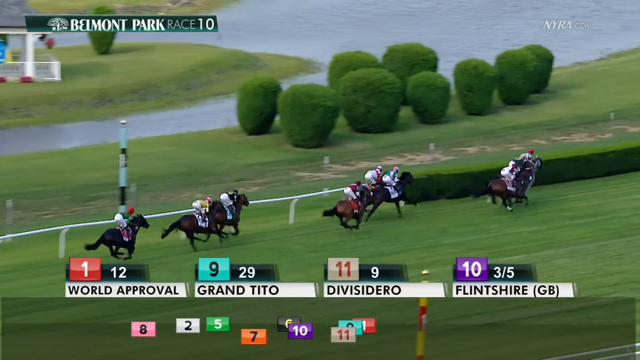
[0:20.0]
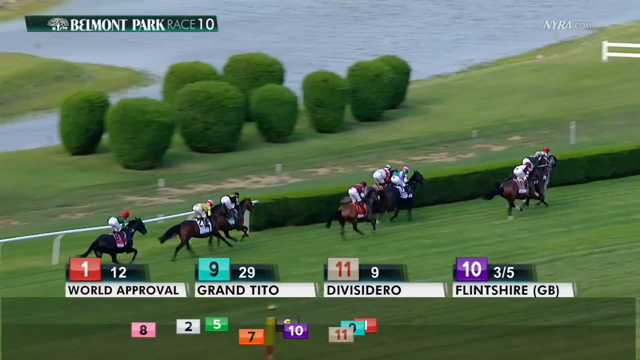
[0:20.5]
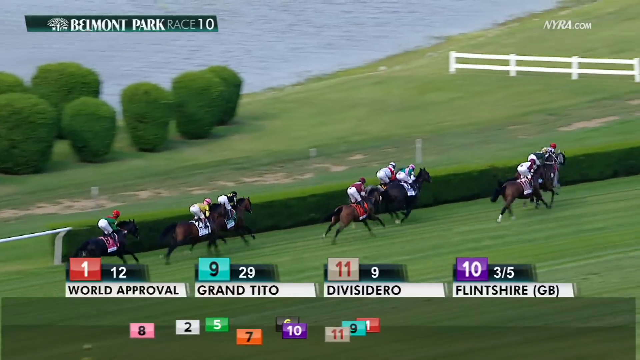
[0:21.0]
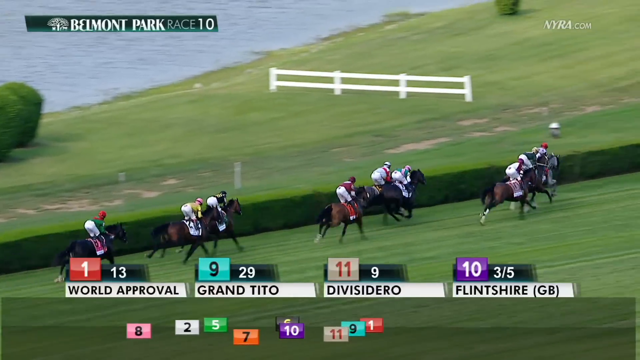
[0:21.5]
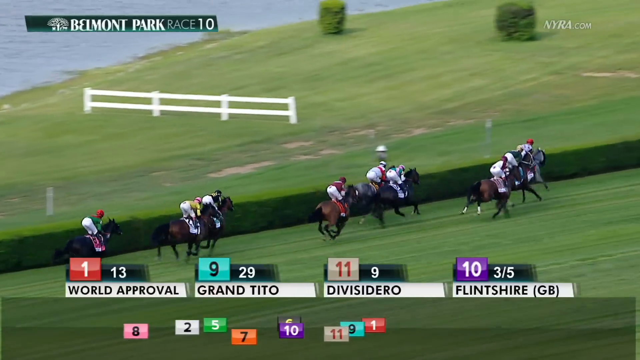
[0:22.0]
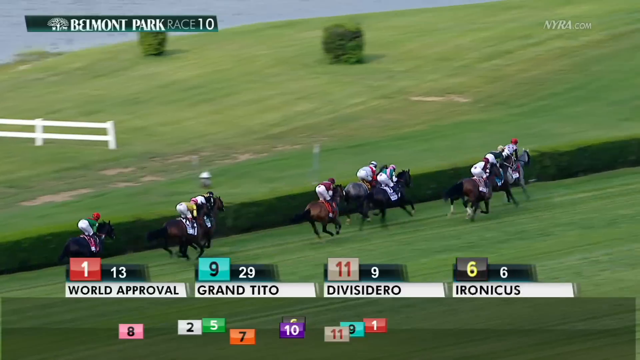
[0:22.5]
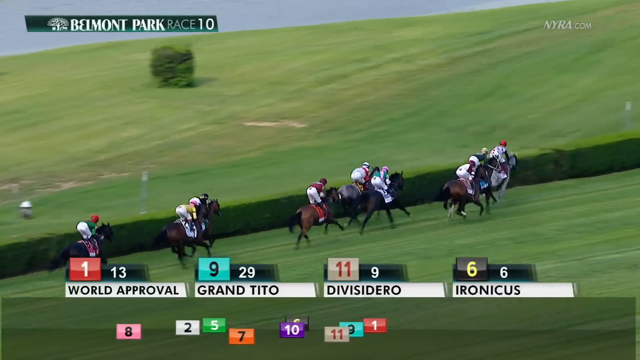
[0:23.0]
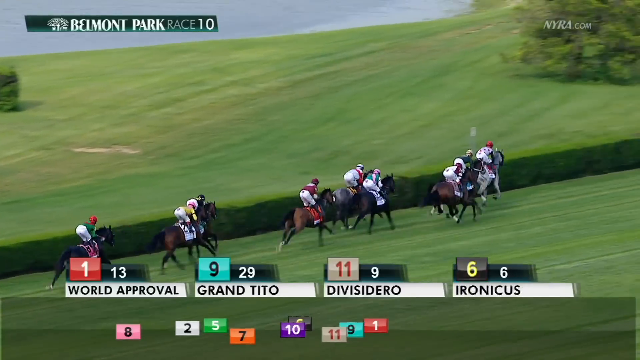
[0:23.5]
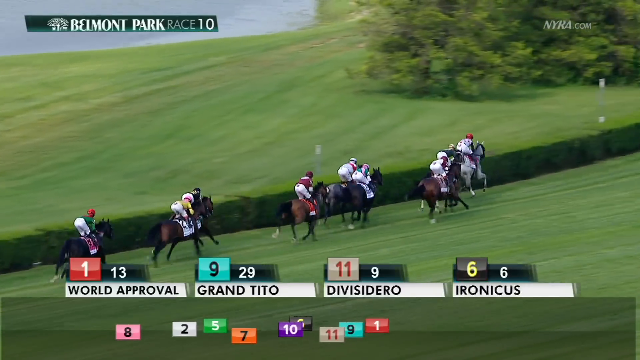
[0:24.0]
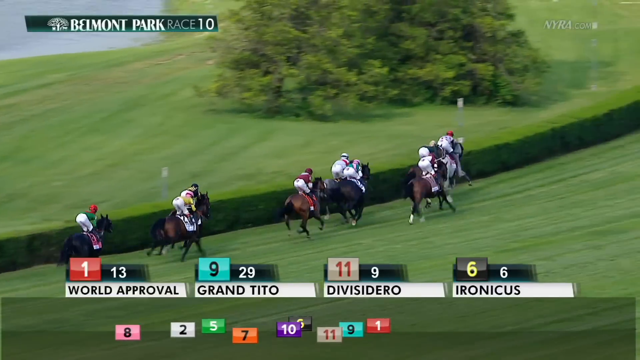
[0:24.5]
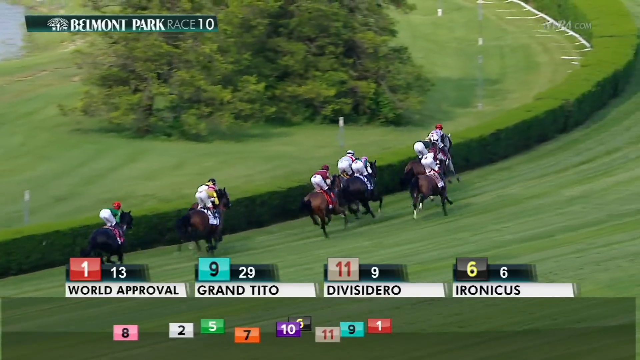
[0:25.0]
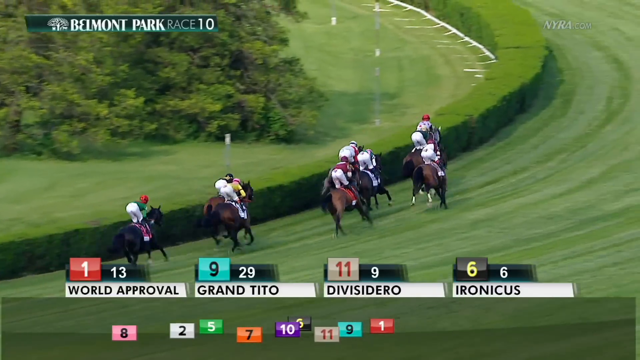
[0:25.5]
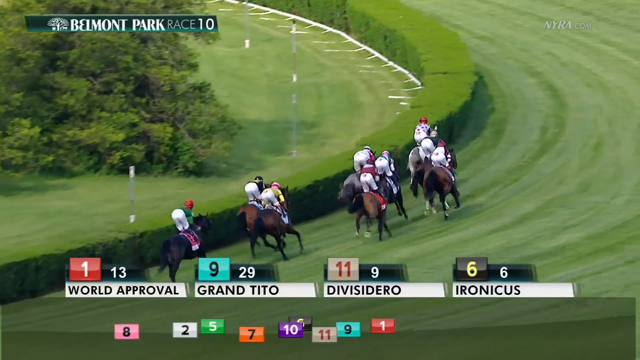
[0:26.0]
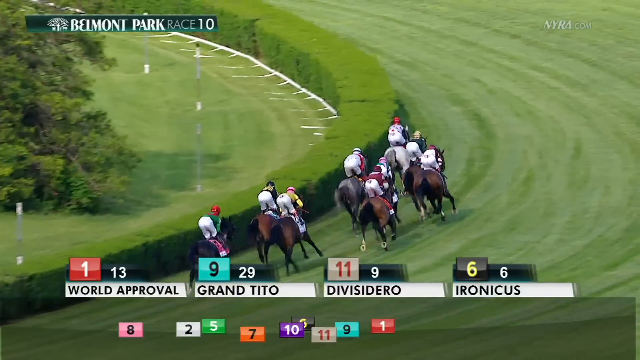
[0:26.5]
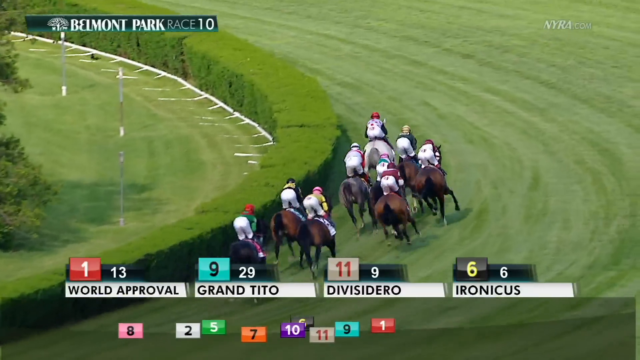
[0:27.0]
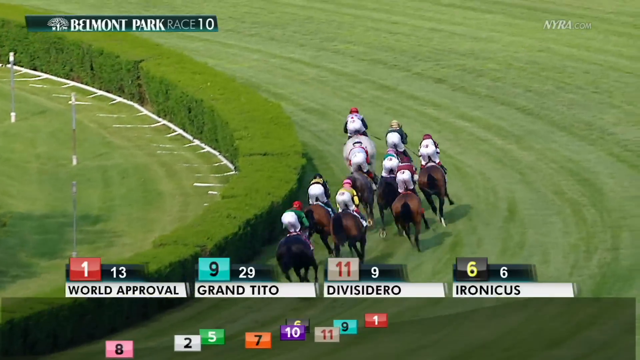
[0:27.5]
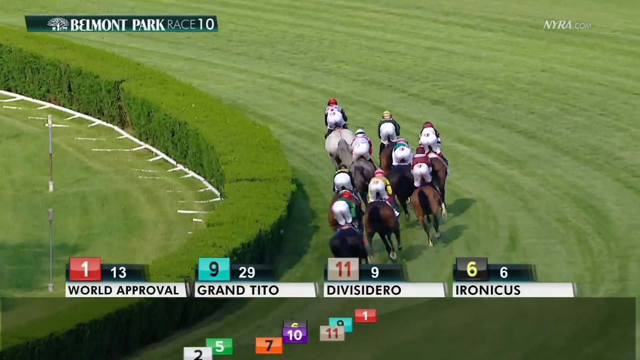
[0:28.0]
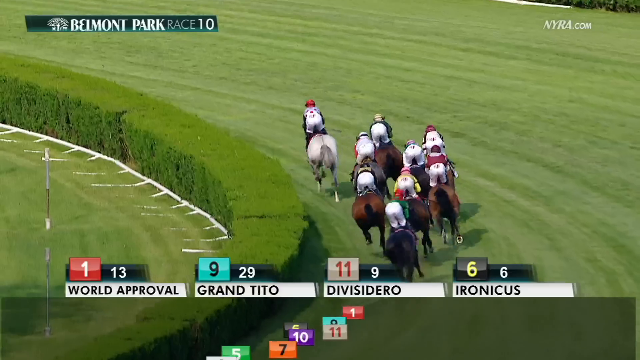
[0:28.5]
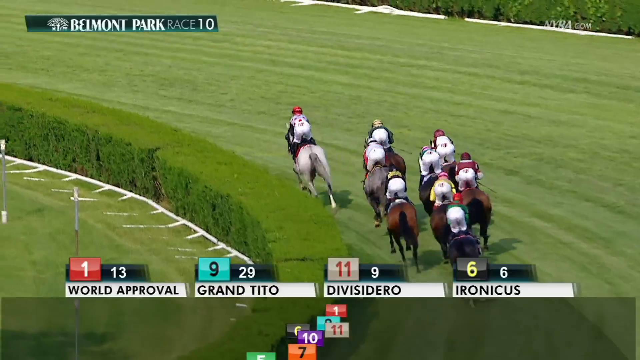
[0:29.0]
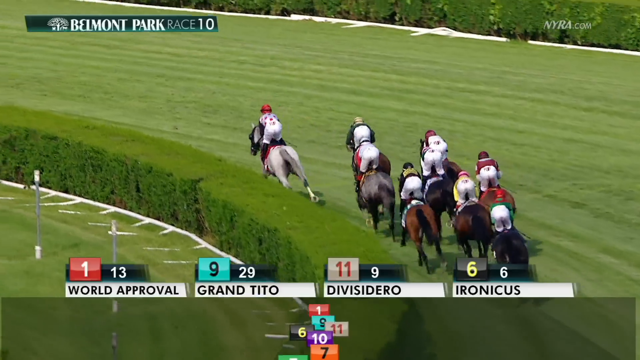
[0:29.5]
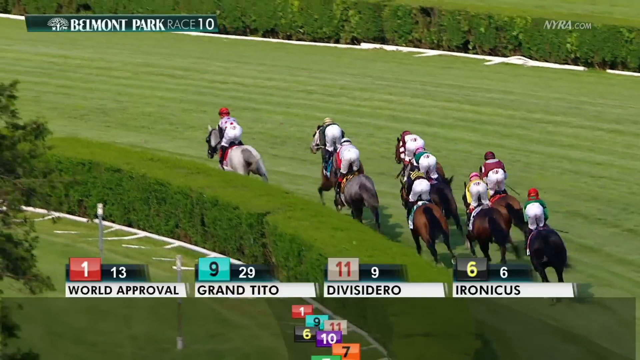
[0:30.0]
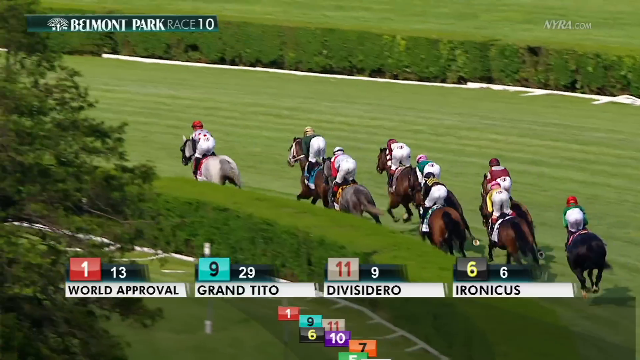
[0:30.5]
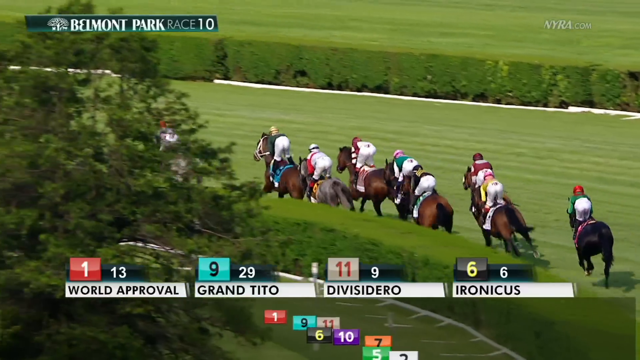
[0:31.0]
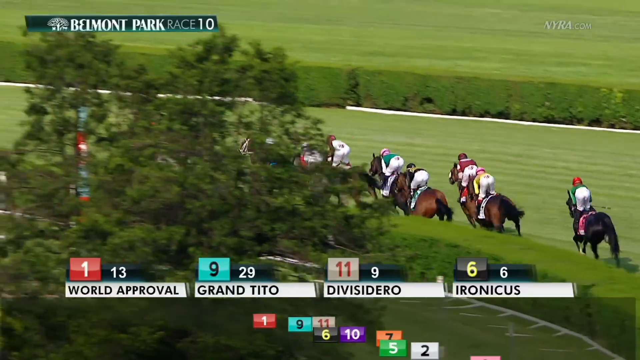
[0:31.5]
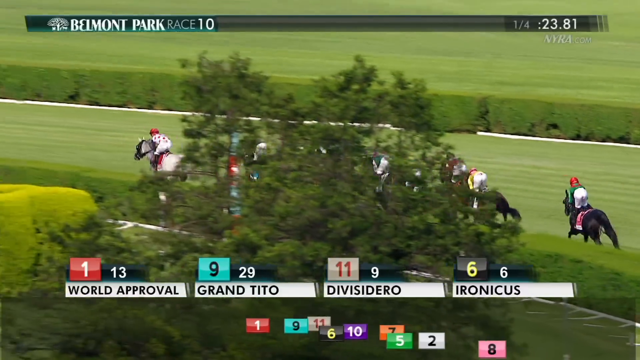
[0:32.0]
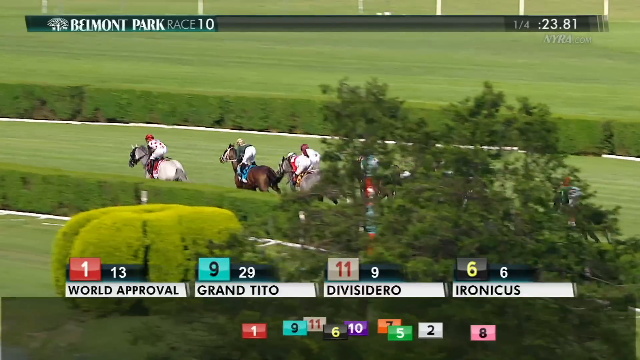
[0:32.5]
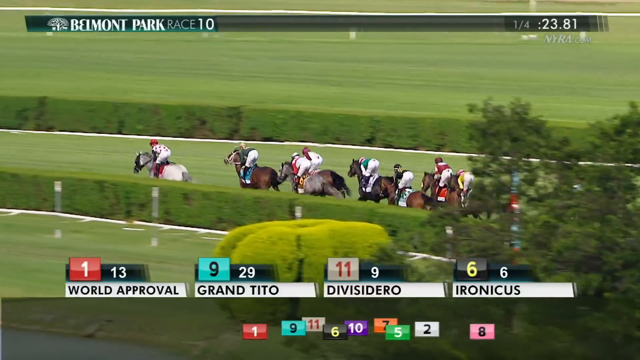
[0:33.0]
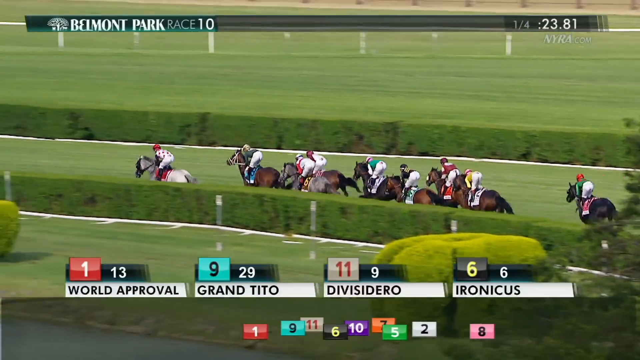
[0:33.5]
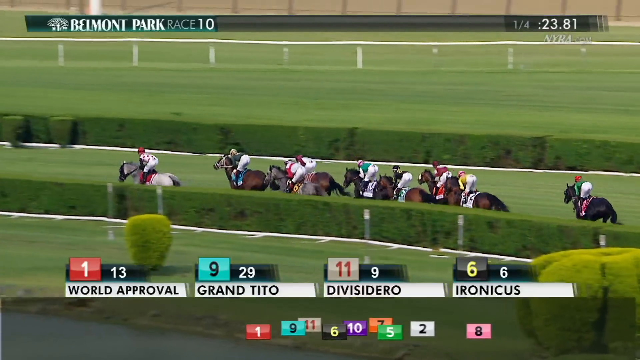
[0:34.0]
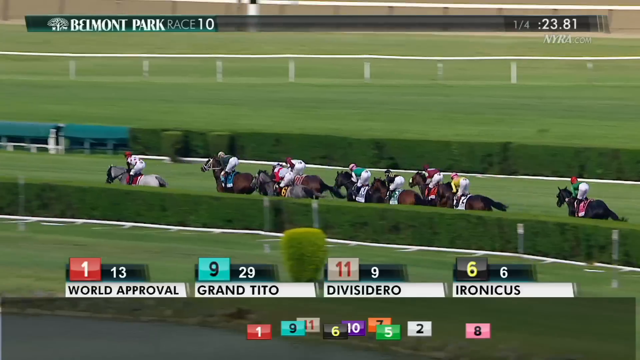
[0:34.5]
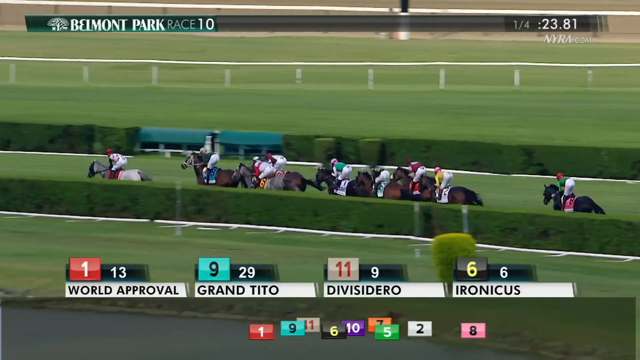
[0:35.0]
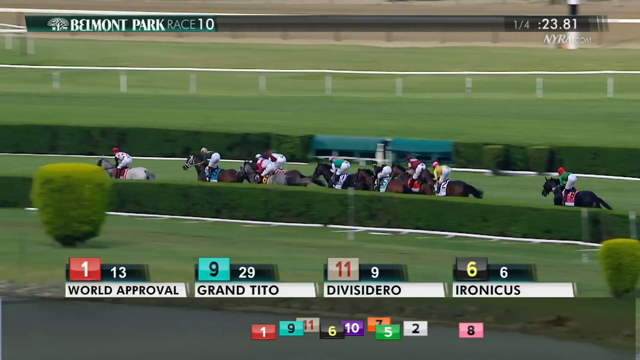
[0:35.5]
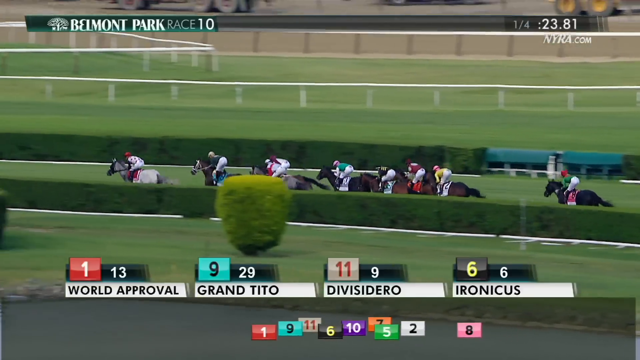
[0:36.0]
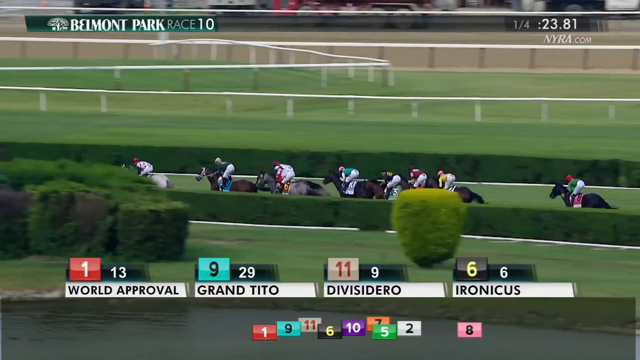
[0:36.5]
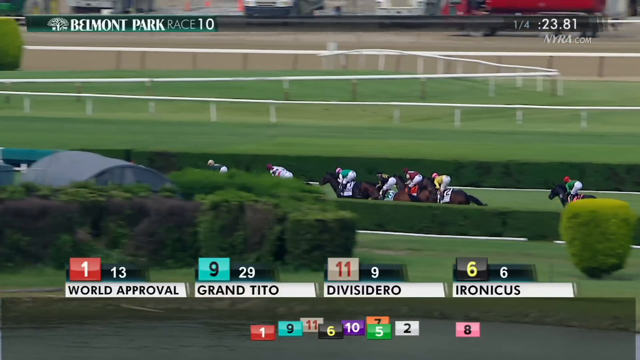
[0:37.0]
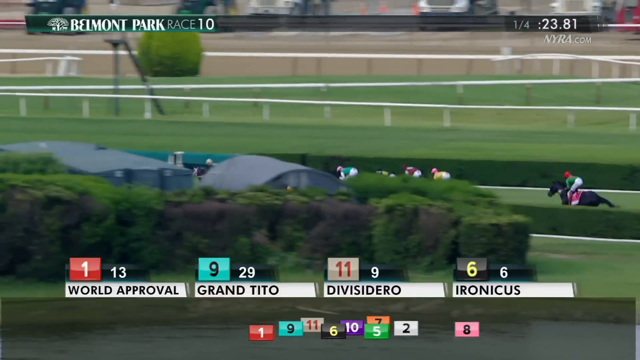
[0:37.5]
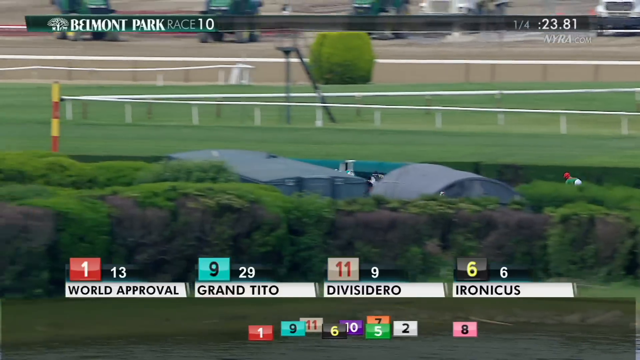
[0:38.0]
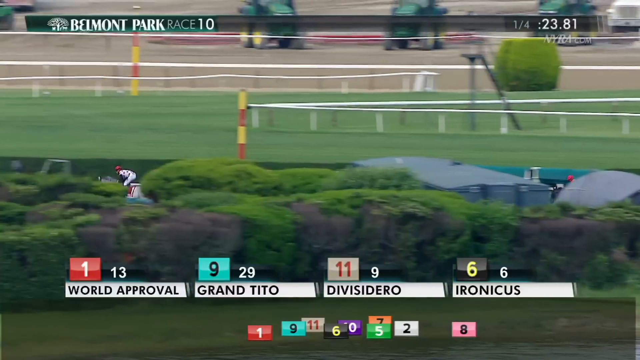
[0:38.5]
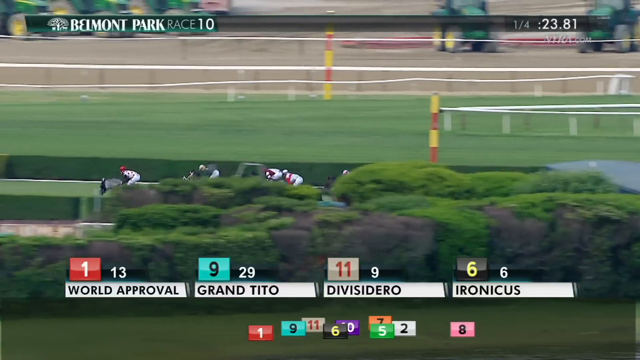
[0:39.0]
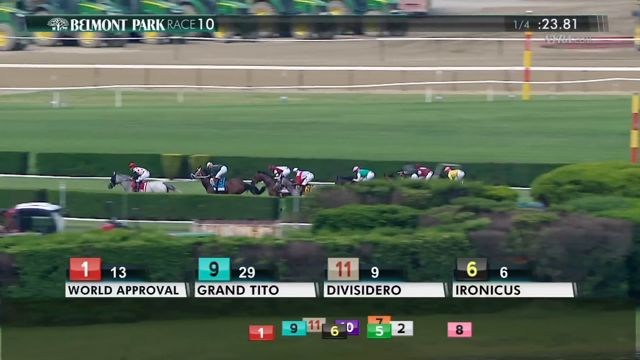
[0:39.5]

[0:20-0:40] Horses race on a track, and at the top left the text reads "Belmont Park, race 10". All the horses are brown. Their placings are shown in a bar at the bottom: World Approval in first, Grand Tito second, Divisadero third and Flintshire fourth. The horses run around the track amid hedges, looping around and trying to get to the inside of the track. The track is very green, with hedging all around its outside. They keep a steady pace. The placings change a little as Arnicus takes fourth; otherwise the order stays the same. "Belmont Race 10" remains at the top.